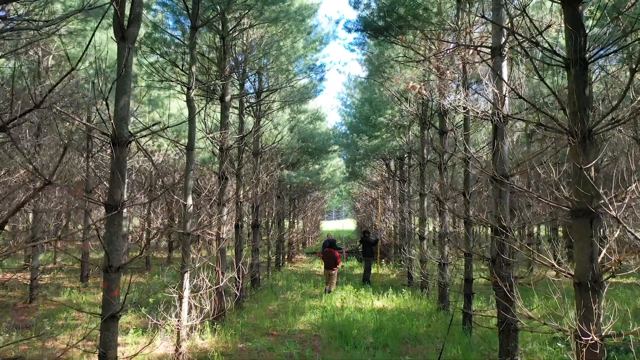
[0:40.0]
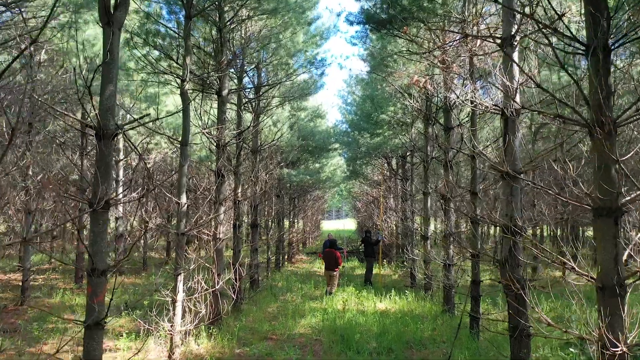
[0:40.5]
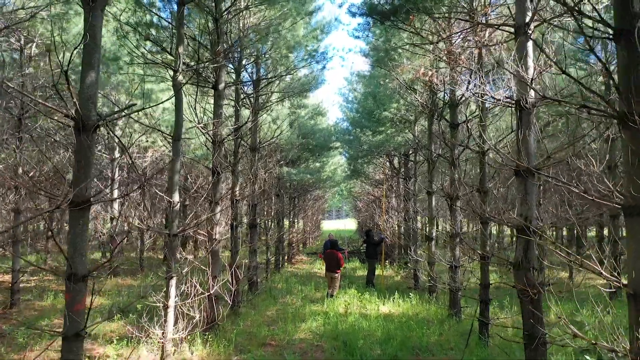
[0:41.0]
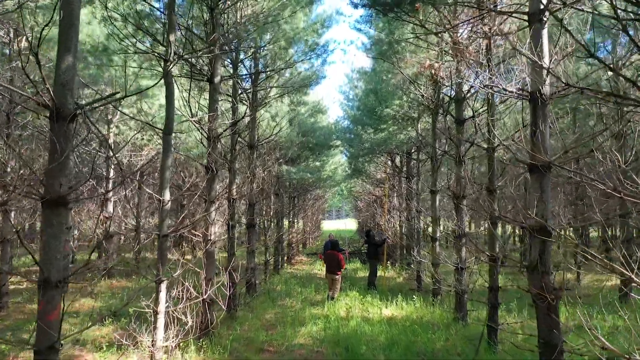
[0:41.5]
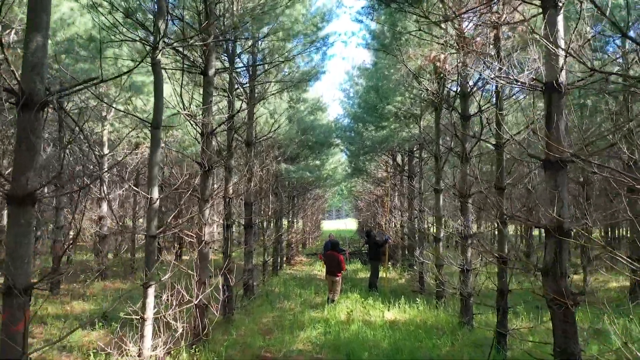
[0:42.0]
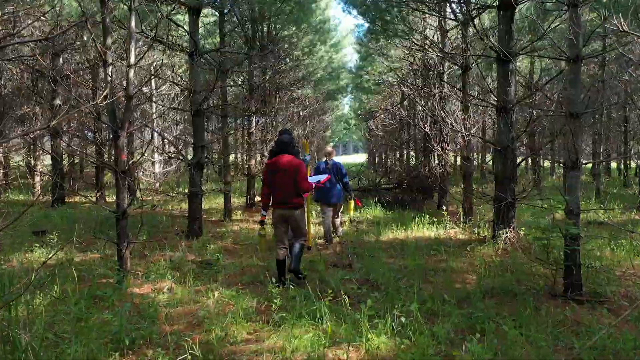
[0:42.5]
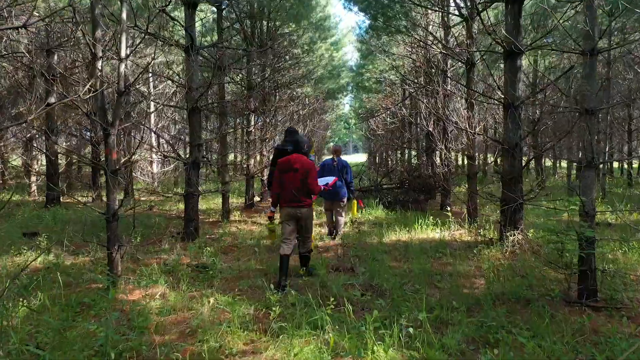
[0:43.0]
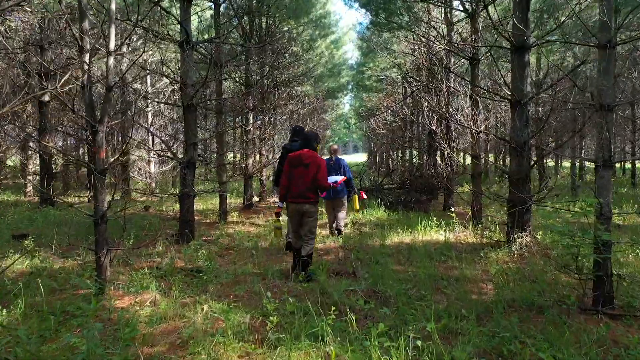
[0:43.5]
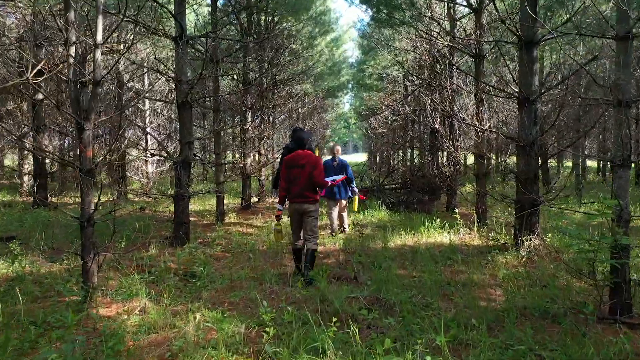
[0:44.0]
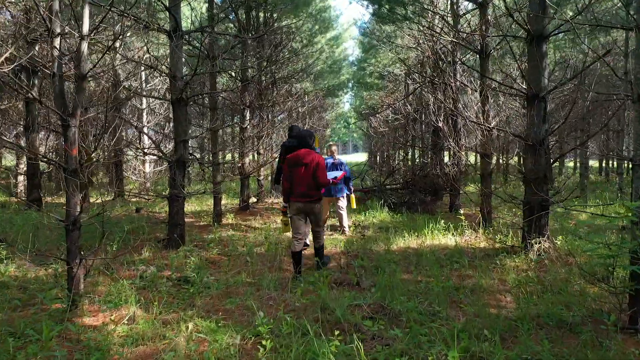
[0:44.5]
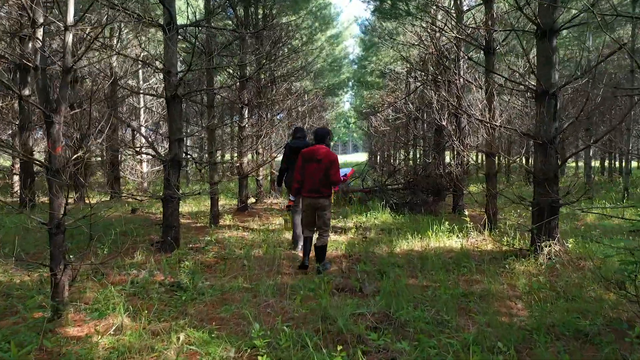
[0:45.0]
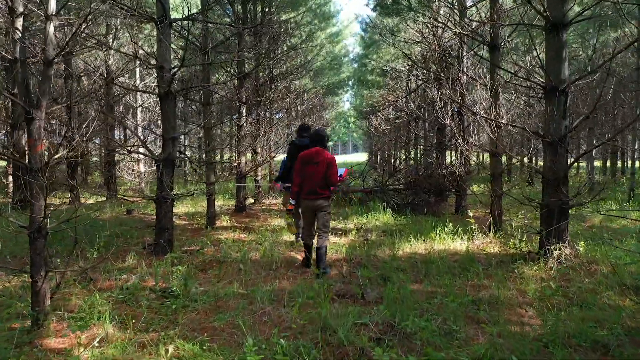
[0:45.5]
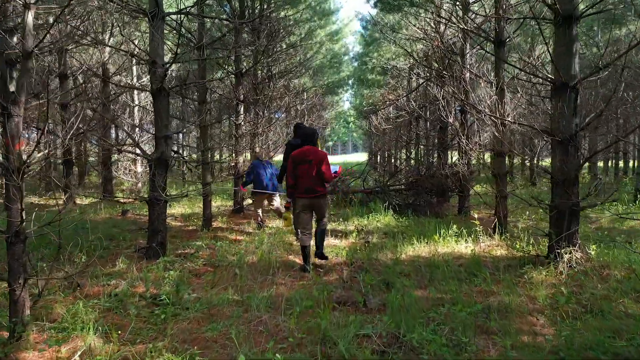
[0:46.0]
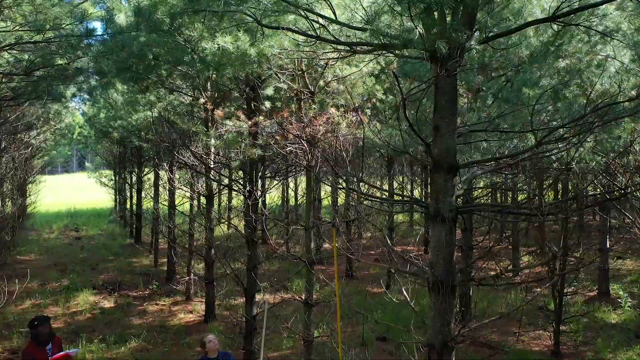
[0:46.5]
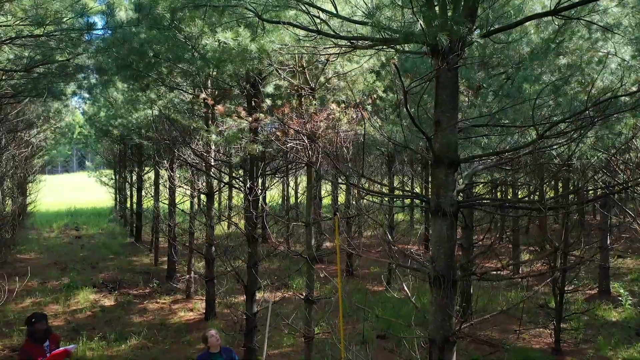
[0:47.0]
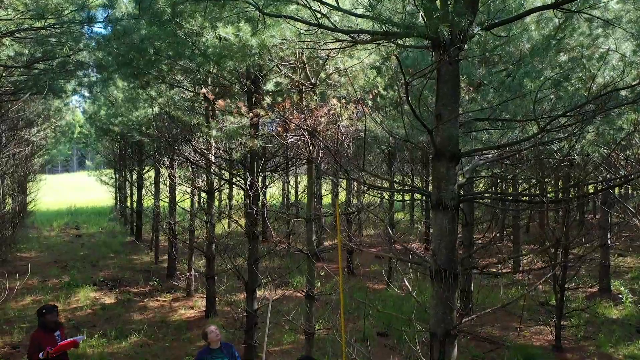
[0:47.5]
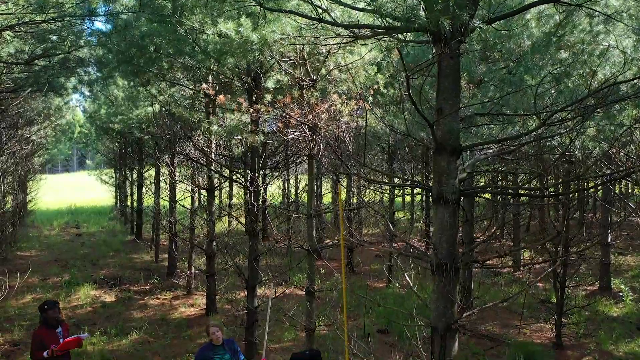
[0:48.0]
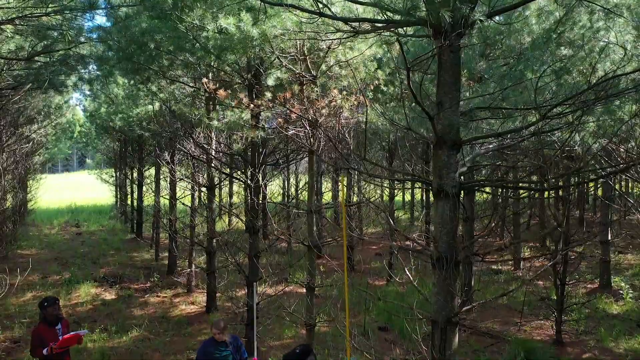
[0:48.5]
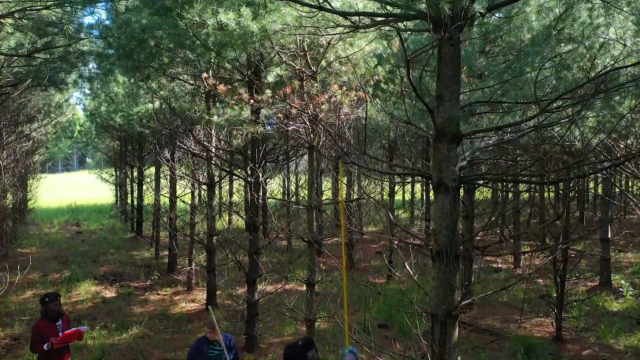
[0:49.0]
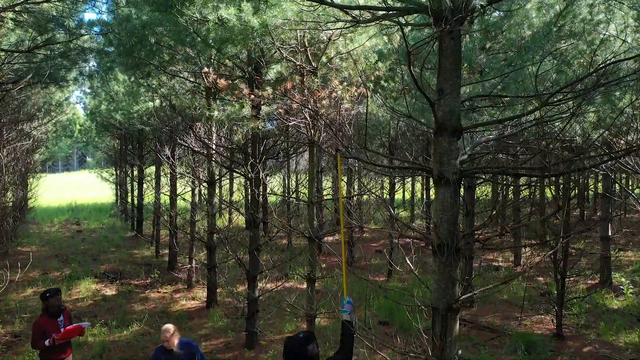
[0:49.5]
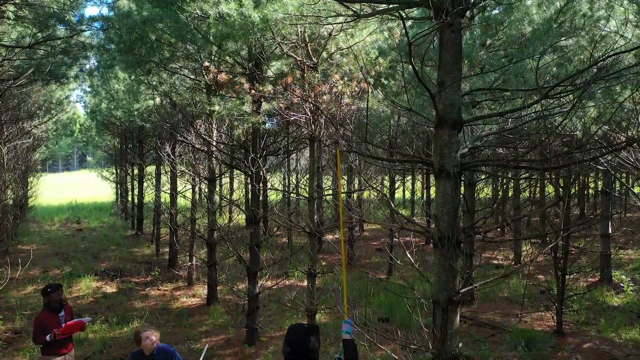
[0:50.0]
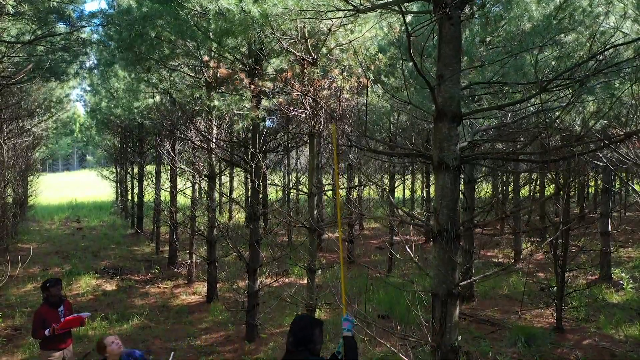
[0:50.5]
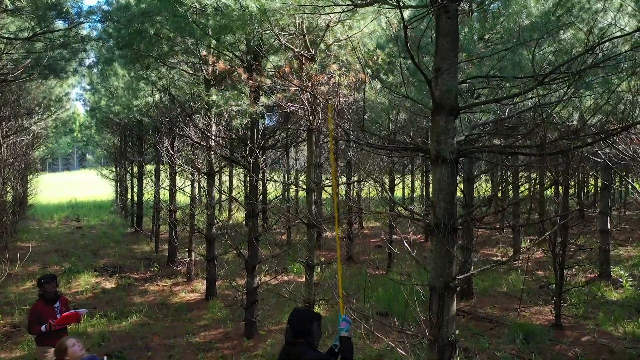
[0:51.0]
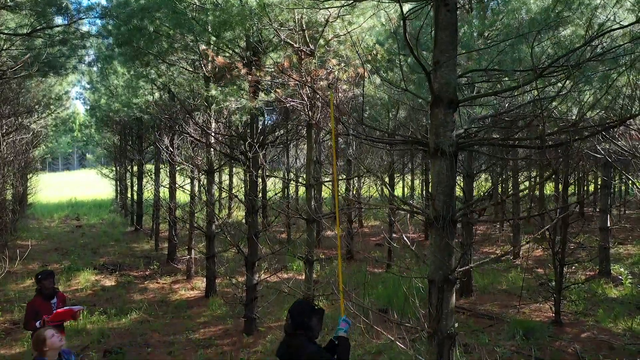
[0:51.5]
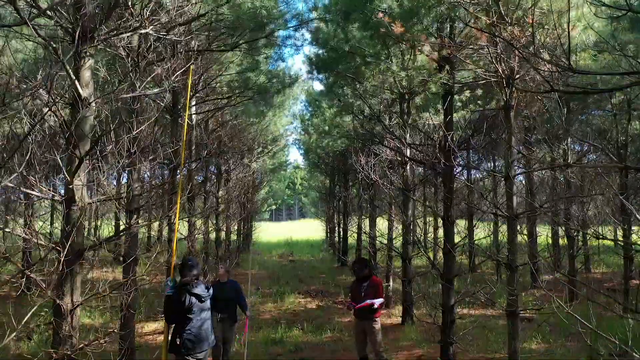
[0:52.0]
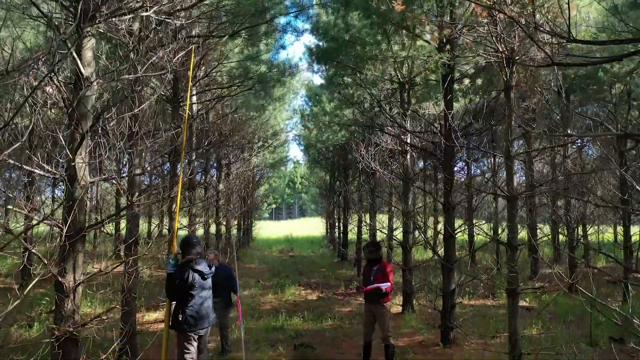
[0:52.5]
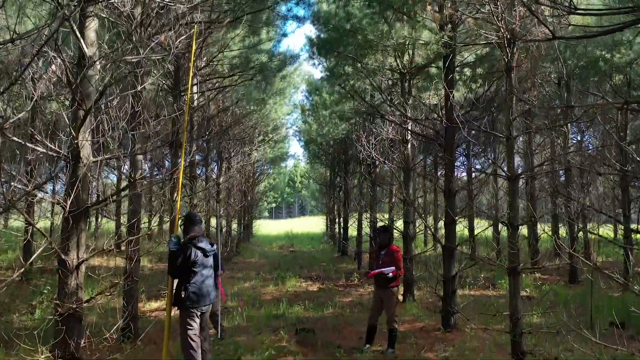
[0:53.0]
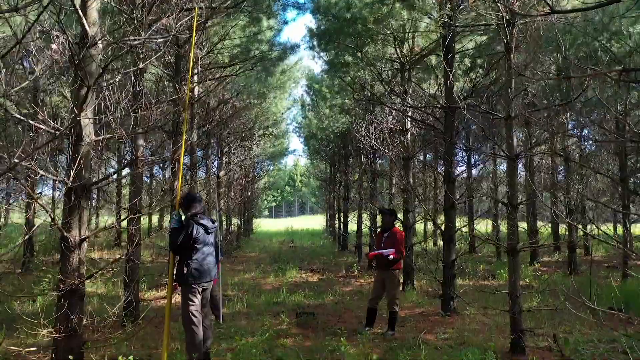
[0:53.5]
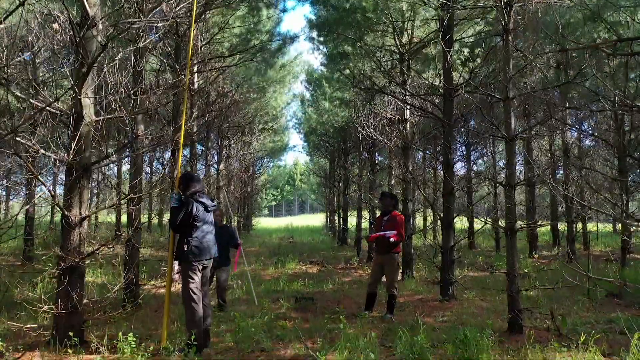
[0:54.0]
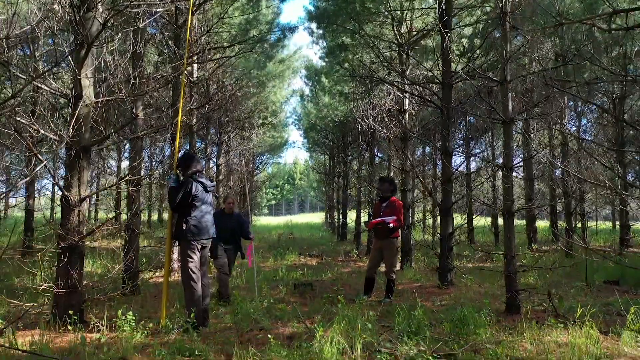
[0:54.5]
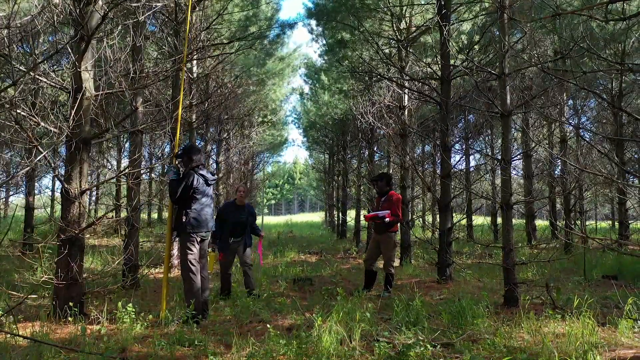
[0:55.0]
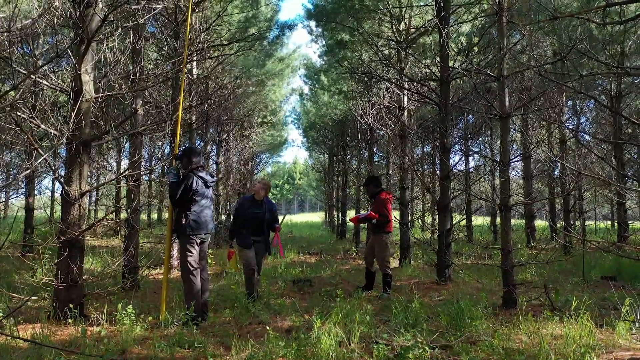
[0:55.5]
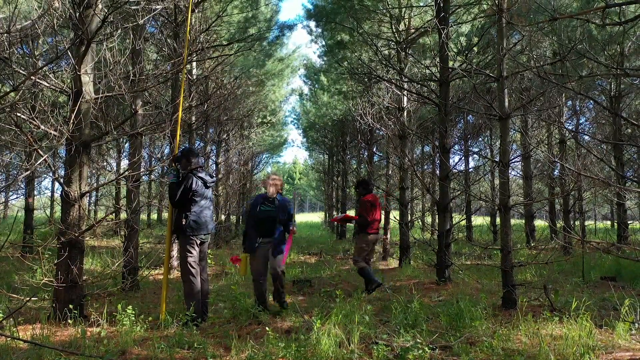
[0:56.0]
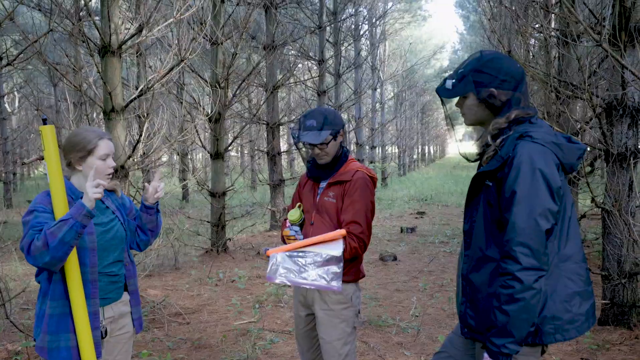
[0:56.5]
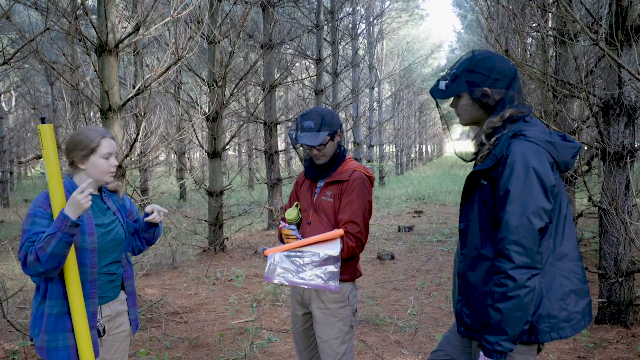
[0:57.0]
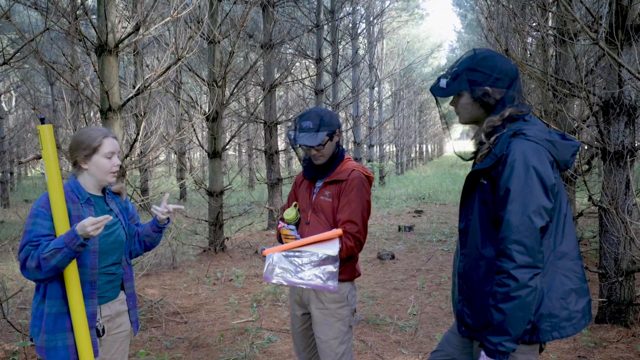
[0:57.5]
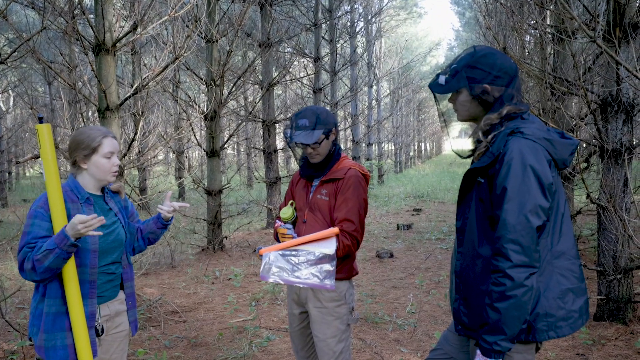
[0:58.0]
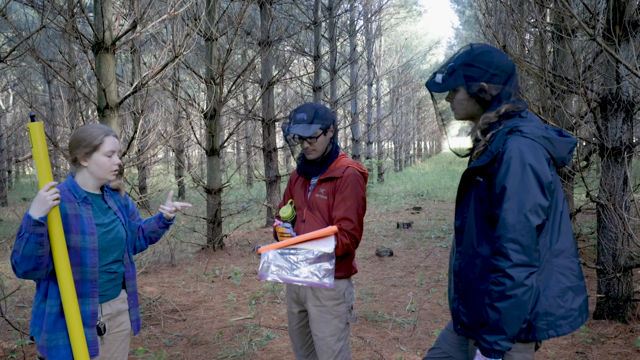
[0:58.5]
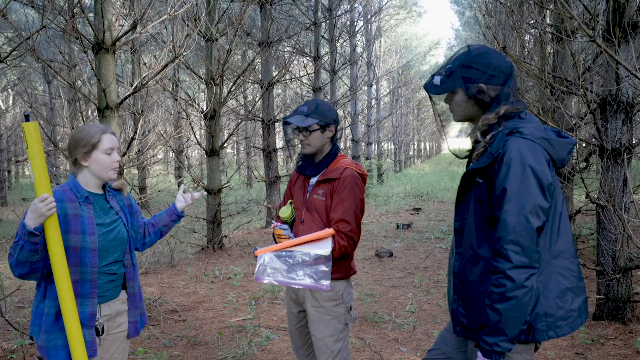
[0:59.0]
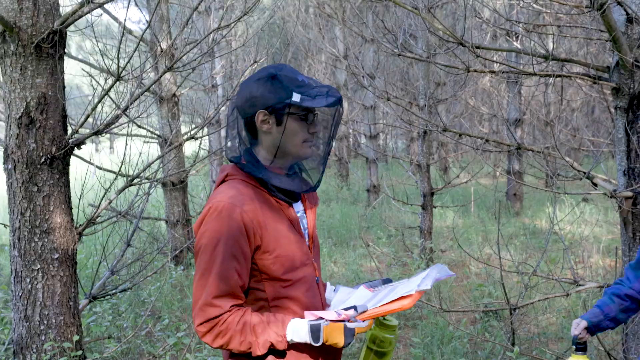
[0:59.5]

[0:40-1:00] A green, grassy path leads away from the viewer, with rows of trees grown very symmetrically along the left and right sides. In the middle are people, one in a black jacket and one in a black jacket on the right, holding a yellow stick vertically. The video moves along the path of trees, following the backs of the three people as they walk. The view then goes from the top down, looking at the right side of the row of trees, where the yellow stick is again held vertically among the three people. The view goes down again; the three people are now on the left side, doing something with the yellow stick and walking around looking up at the trees. Another scene, at a leftward angle, shows a woman on the left, a man in a red jacket in the middle, and a woman in a blue jacket on the right, looking at each other. The man in the red jacket holds an orange clipboard on his left forearm and writes on it. The woman on the left holds the yellow stick around her right arm and gestures with both hands as she talks. The man in the red jacket is then shown holding the orange clipboard with his right hand; he has a bee net over his face and talks to the woman on the right, who looks at the clipboard and raises her left hand toward it. They keep talking.